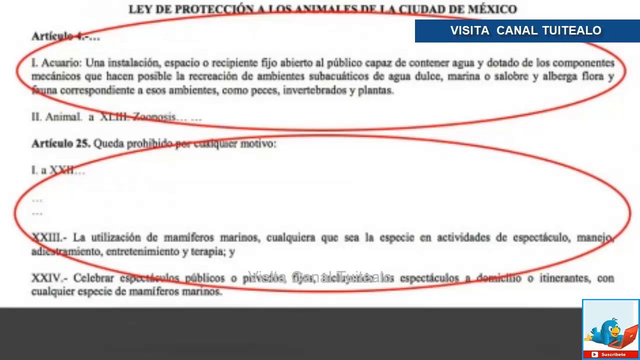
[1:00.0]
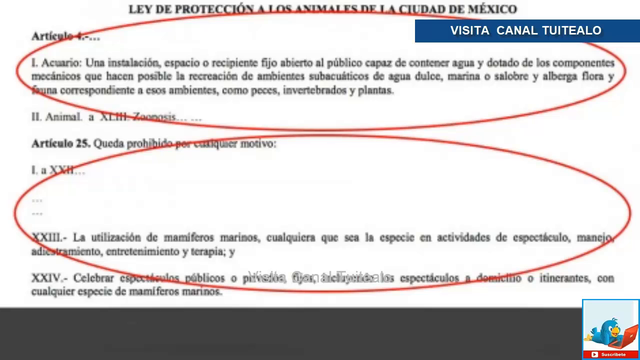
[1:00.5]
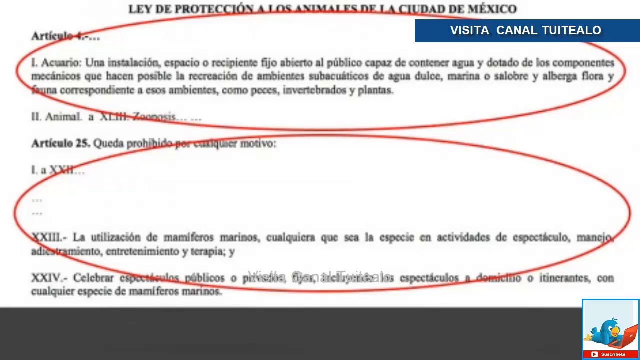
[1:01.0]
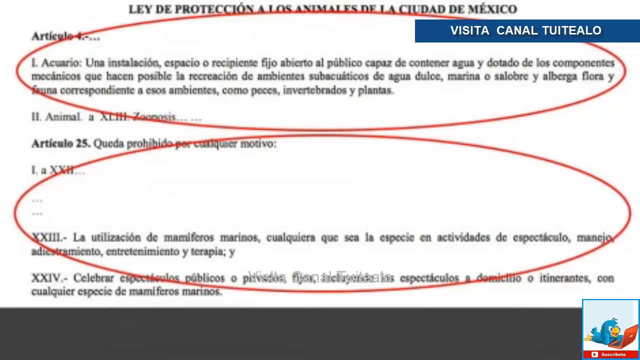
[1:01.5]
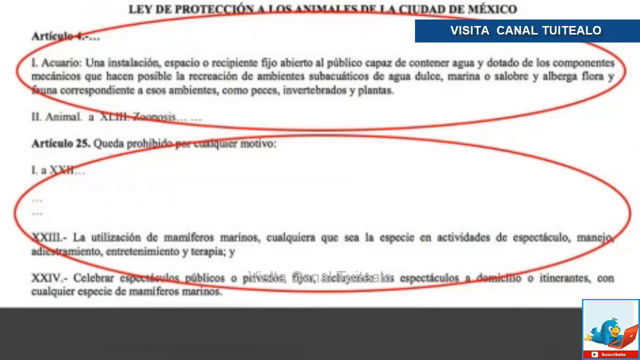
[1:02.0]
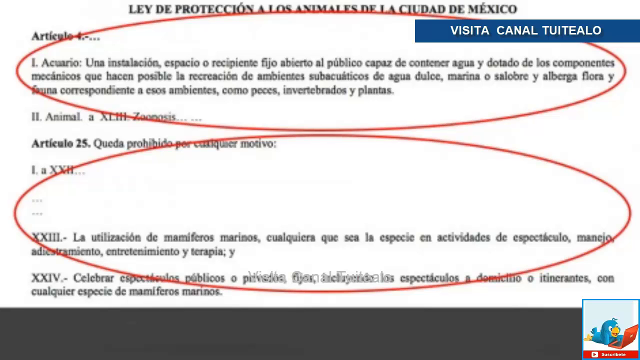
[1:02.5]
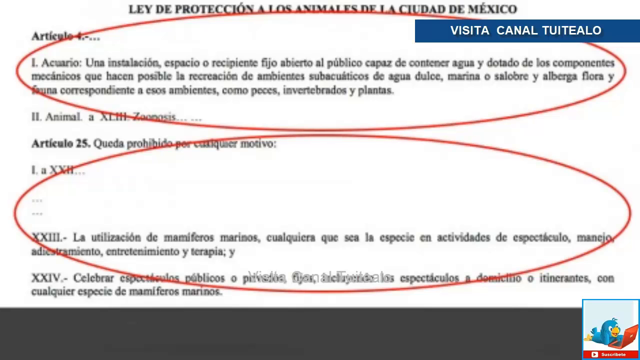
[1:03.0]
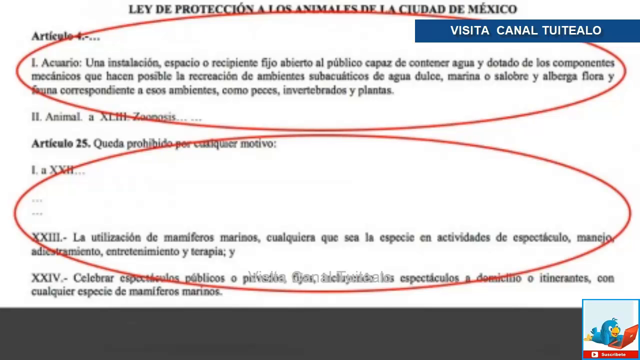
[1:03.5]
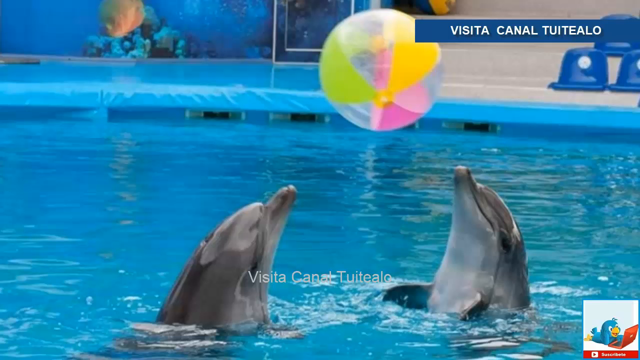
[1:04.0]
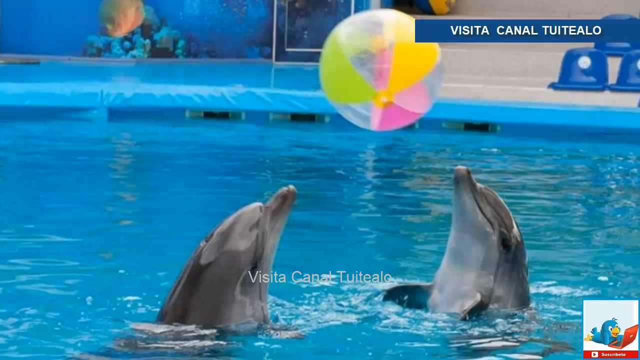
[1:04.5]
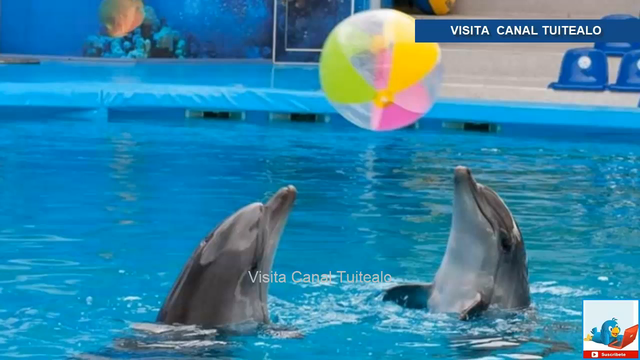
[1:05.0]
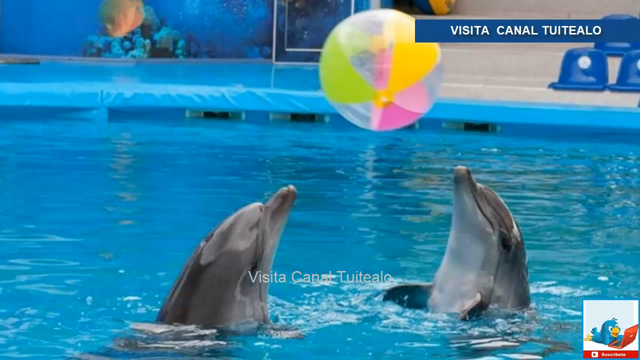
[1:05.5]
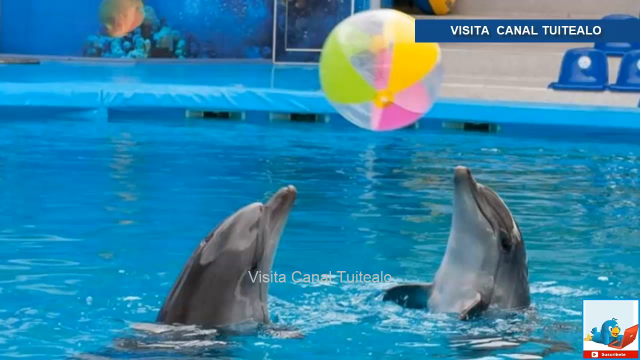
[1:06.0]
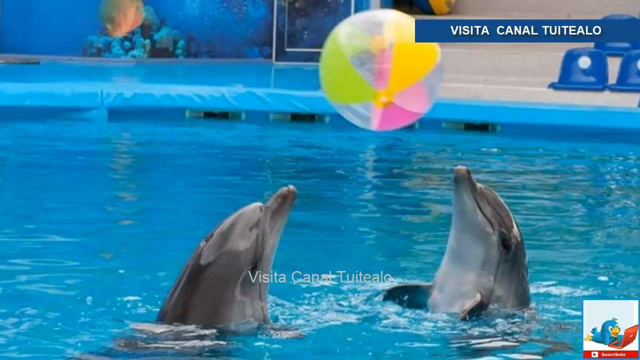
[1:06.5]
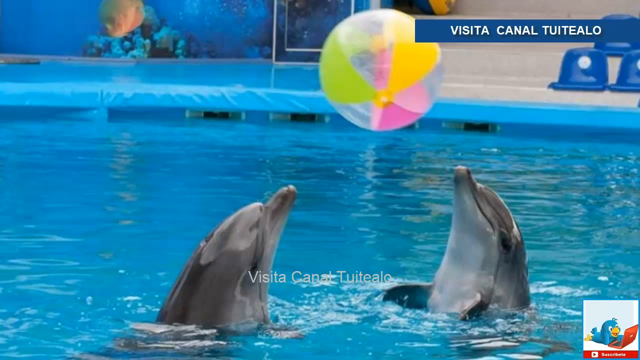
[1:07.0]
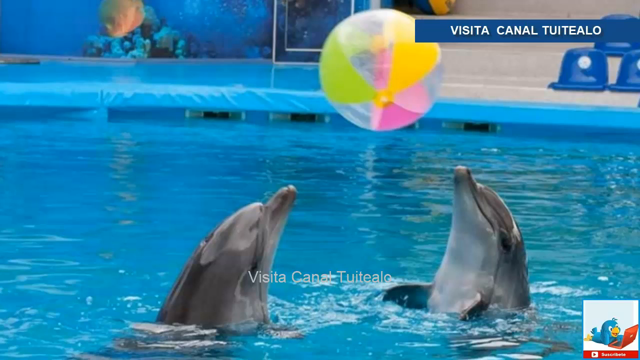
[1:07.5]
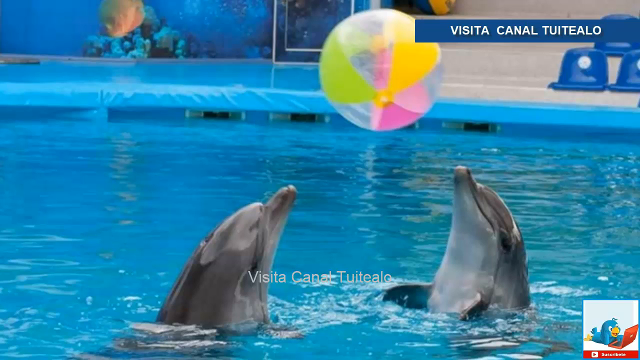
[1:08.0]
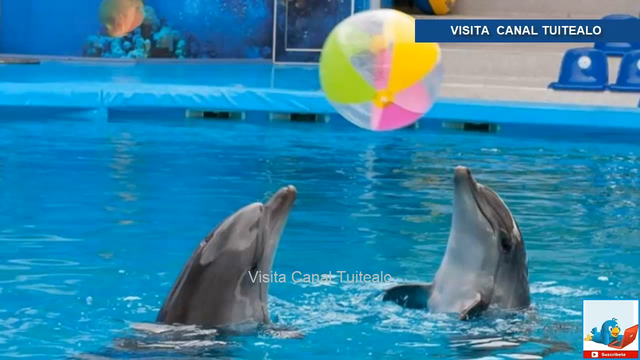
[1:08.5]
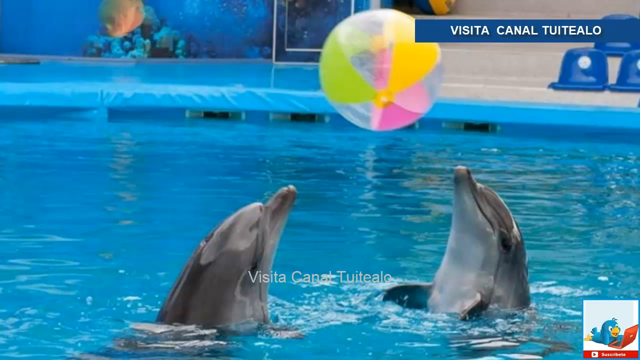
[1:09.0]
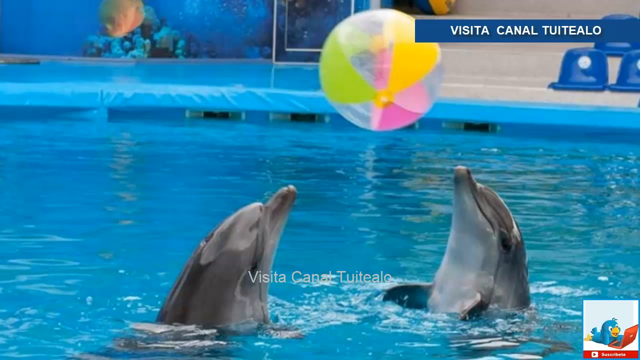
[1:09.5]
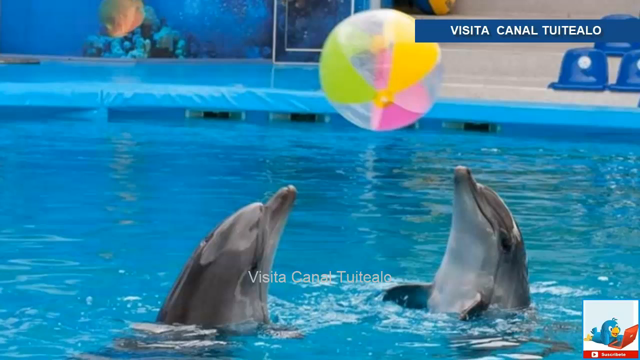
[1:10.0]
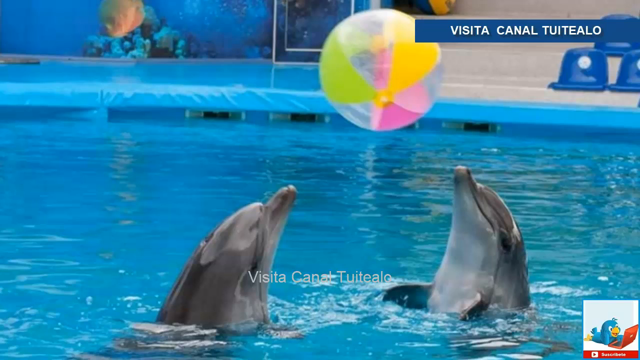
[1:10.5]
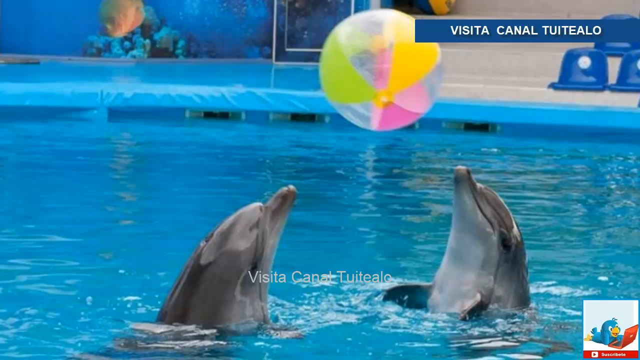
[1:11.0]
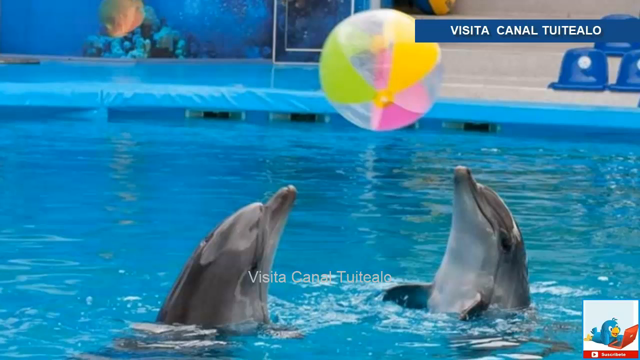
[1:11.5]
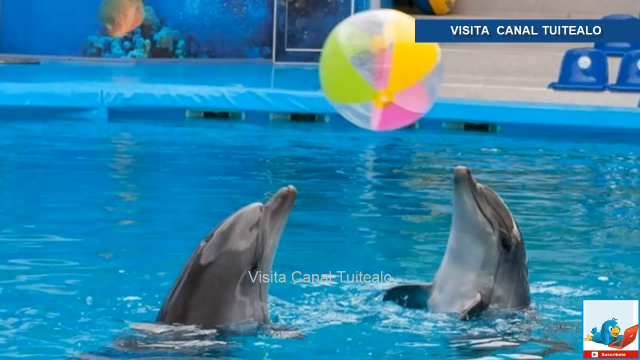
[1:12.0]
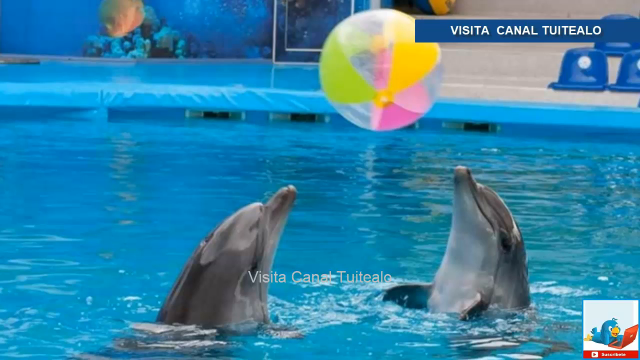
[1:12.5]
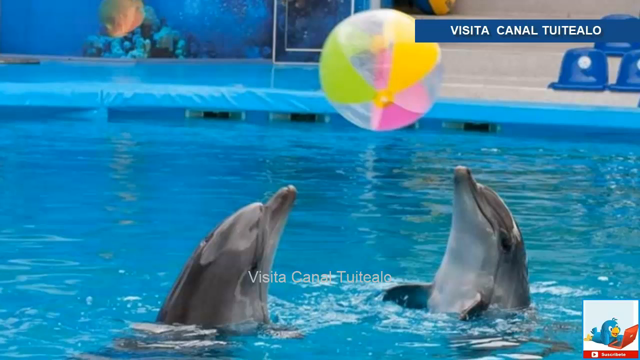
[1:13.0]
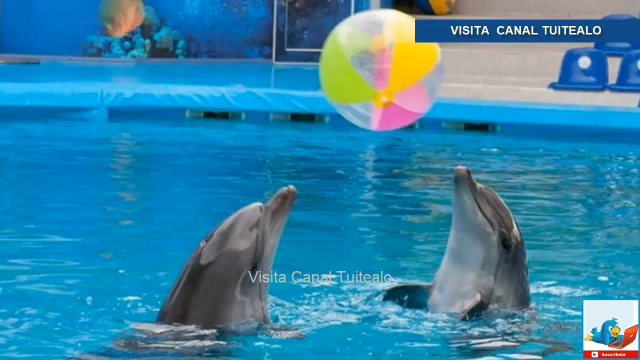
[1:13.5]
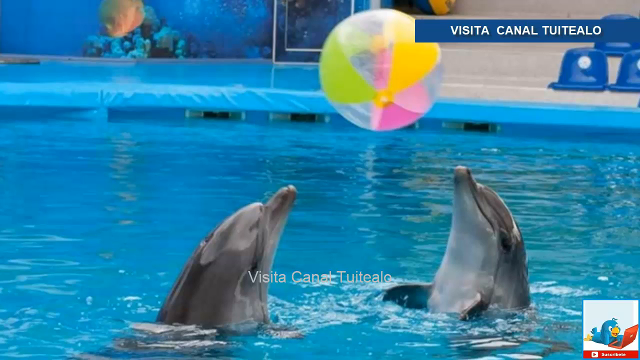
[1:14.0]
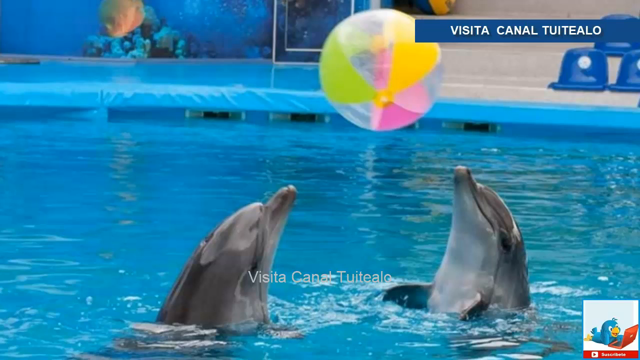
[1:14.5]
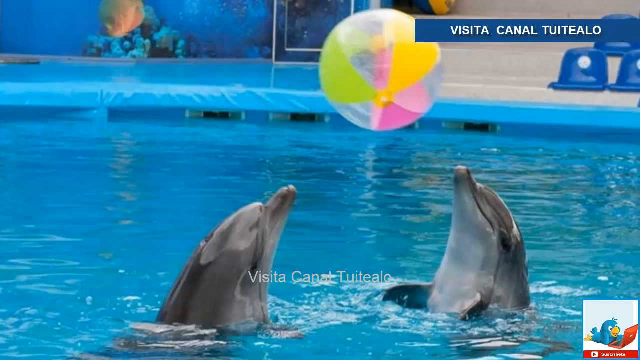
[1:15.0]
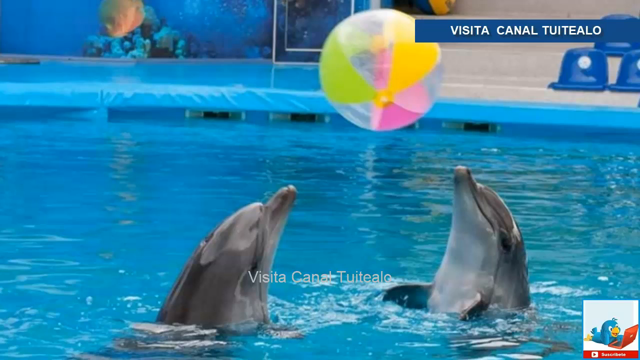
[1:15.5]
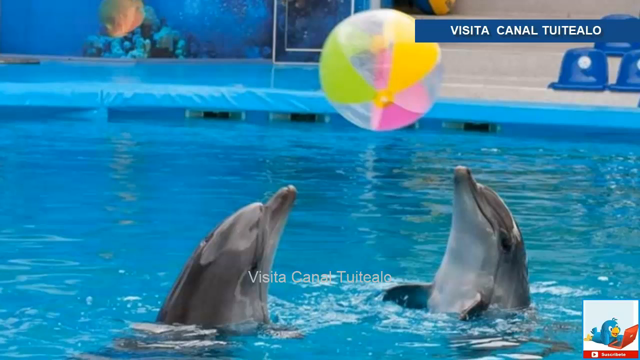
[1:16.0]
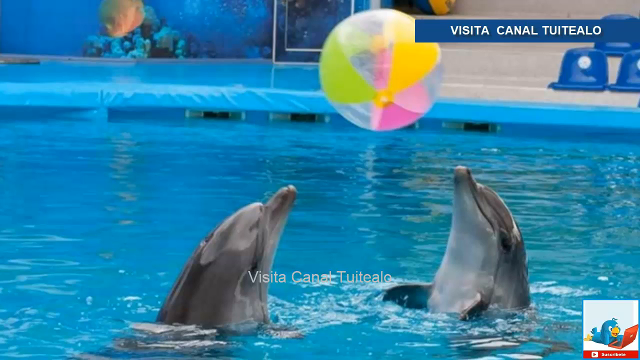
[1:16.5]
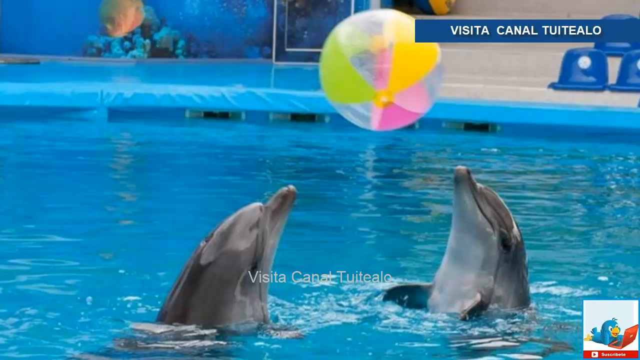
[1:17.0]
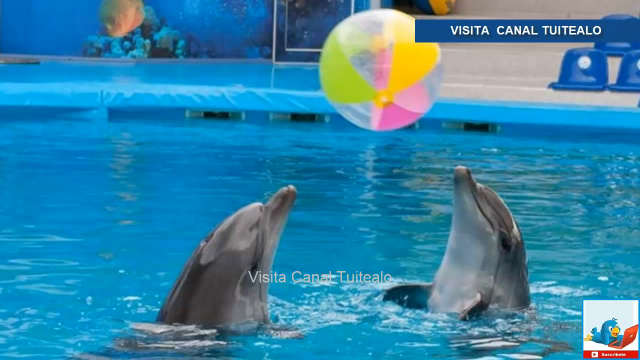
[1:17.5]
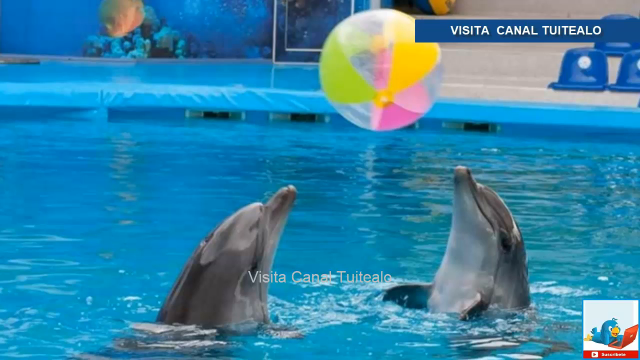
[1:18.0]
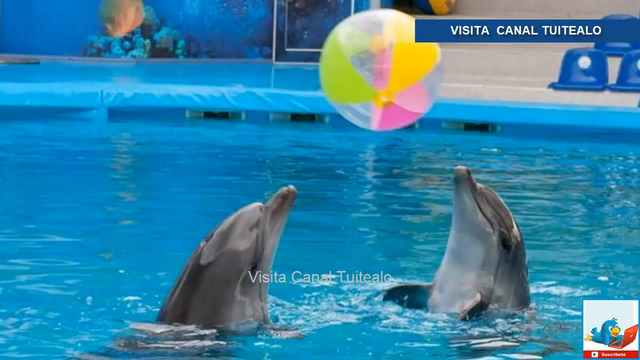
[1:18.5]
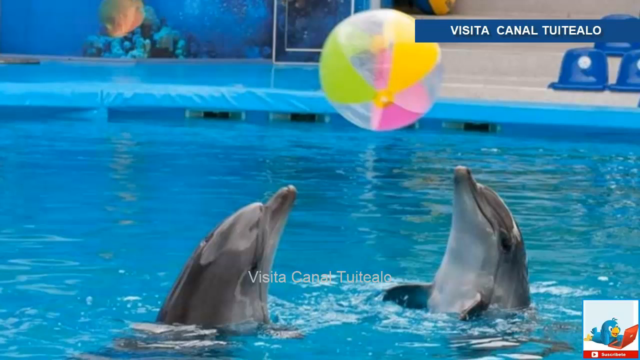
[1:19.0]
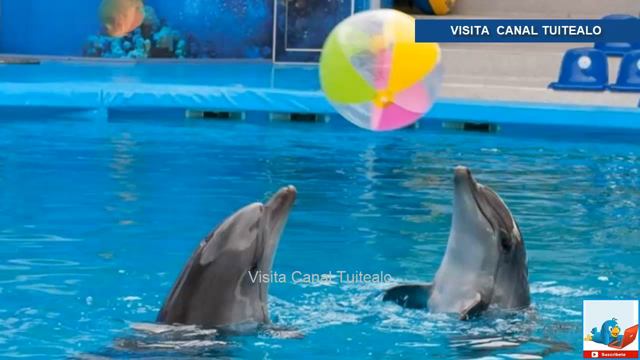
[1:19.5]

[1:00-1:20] The page of black text continues. A line of bold text at the top begins with the letter L and ends with the word Mexico, followed by bullet points, some of which are highlighted in bold. The video then cuts back to the still photo of the dolphins, which seems to be the main part of the video. No people are visible in the photograph. The grey dolphins appear happy and are both looking up at the beach ball between them; it seems they are passing the ball between each other, or the ball may have been thrown to them and they are waiting for it to land on one of their noses. They appear to be eagerly waiting to hit the ball.